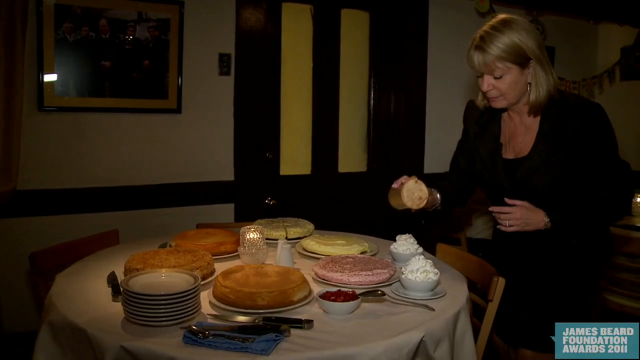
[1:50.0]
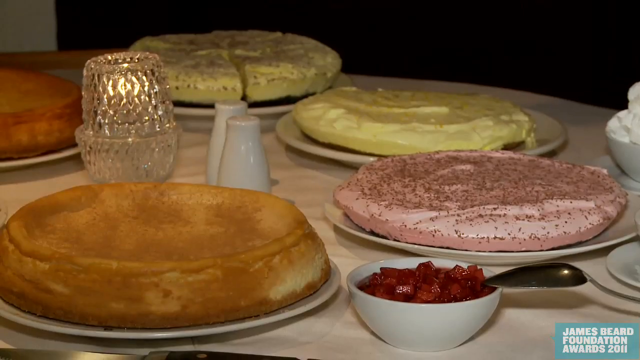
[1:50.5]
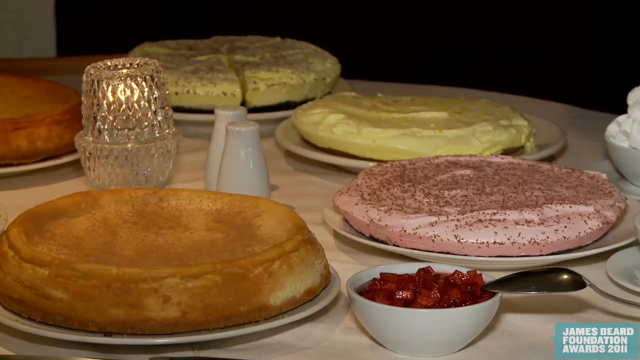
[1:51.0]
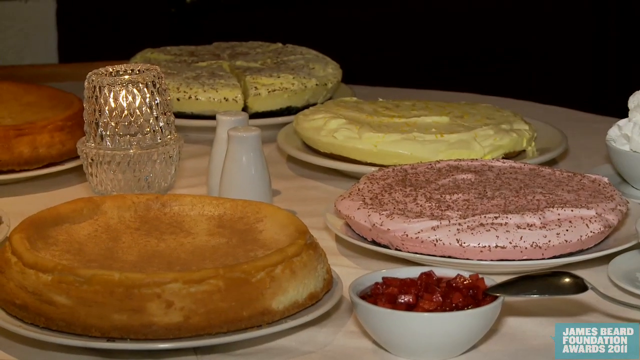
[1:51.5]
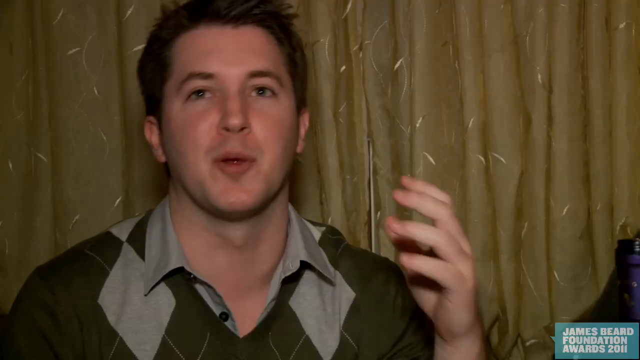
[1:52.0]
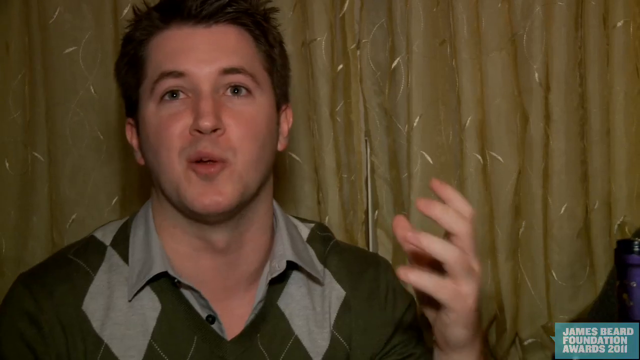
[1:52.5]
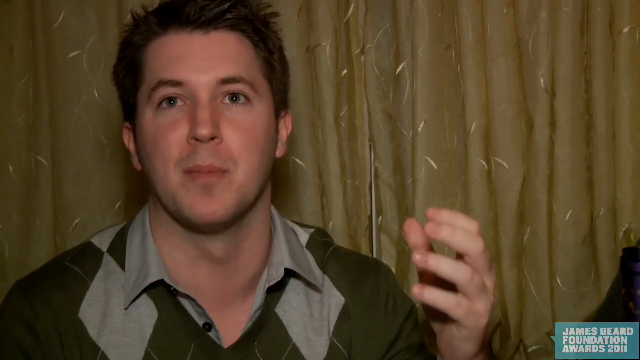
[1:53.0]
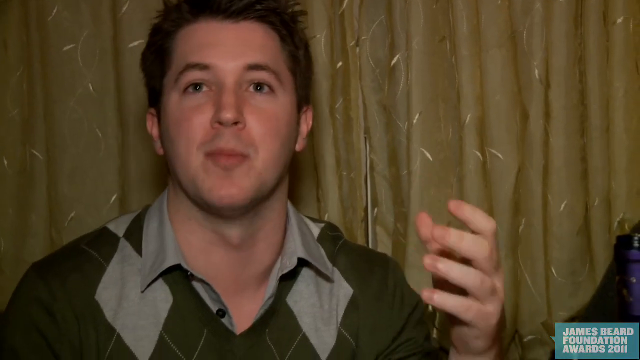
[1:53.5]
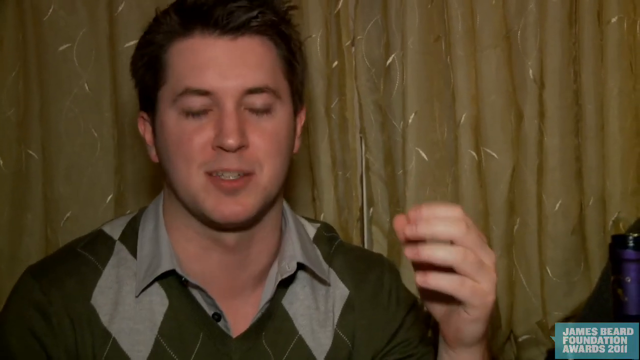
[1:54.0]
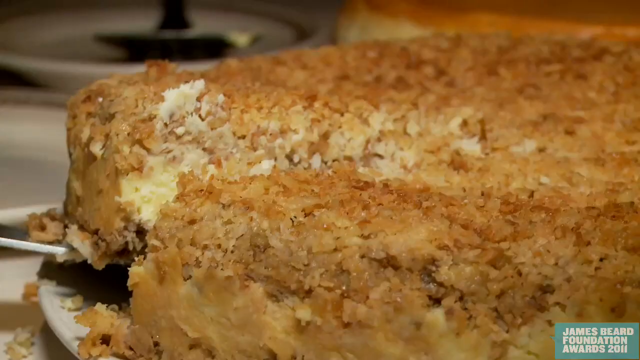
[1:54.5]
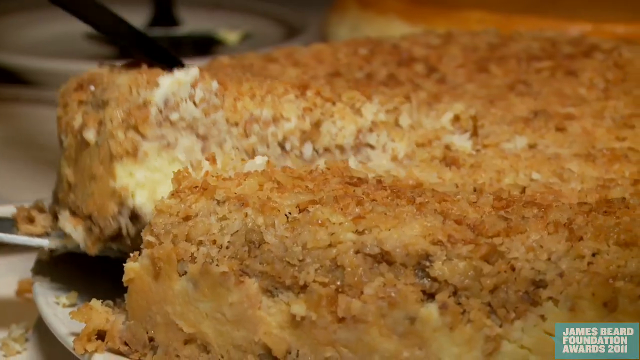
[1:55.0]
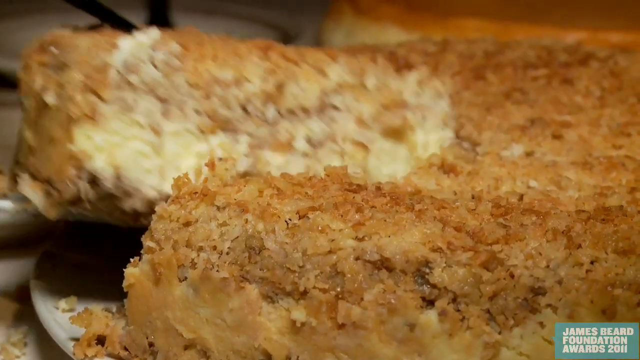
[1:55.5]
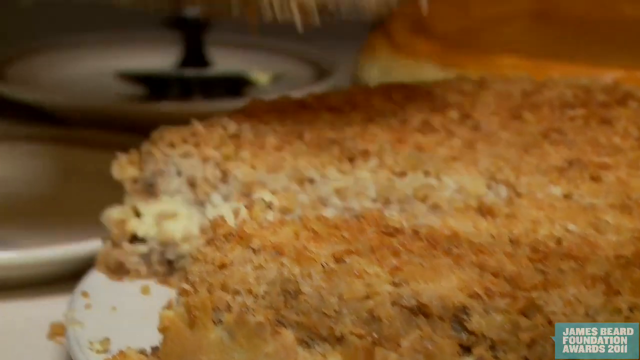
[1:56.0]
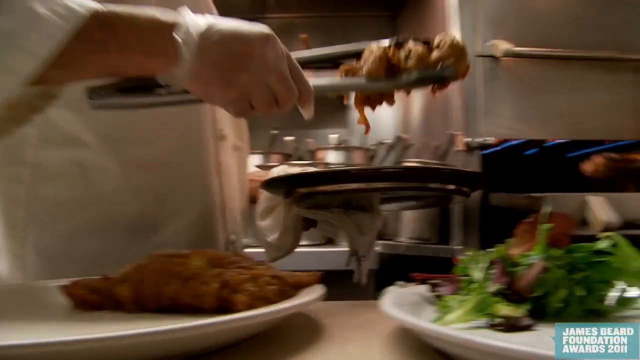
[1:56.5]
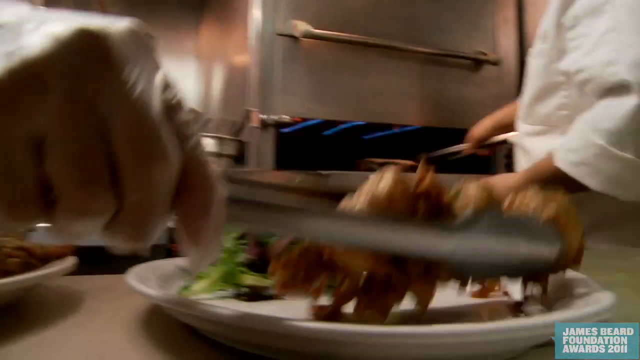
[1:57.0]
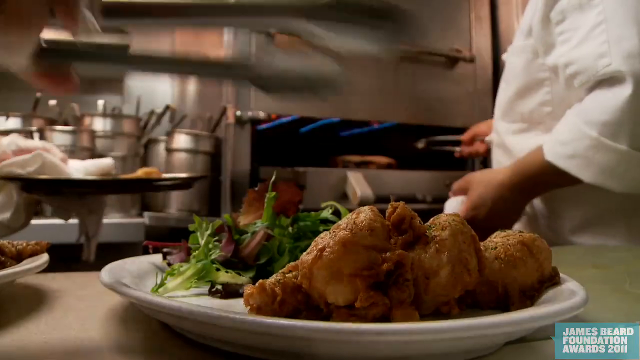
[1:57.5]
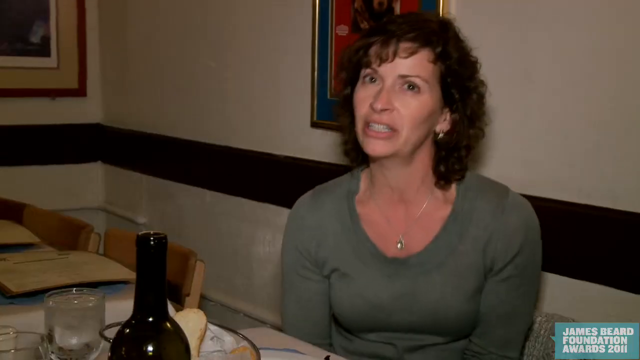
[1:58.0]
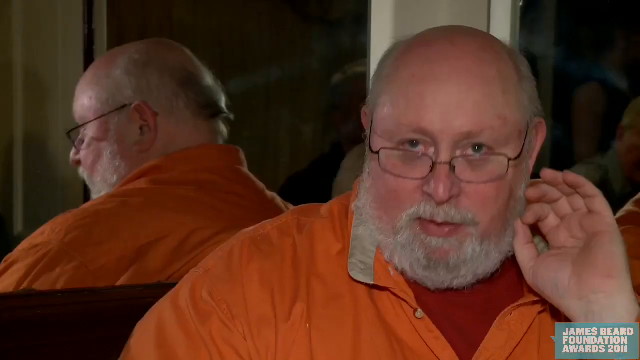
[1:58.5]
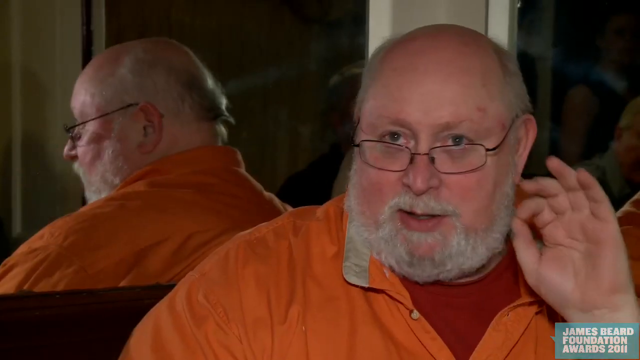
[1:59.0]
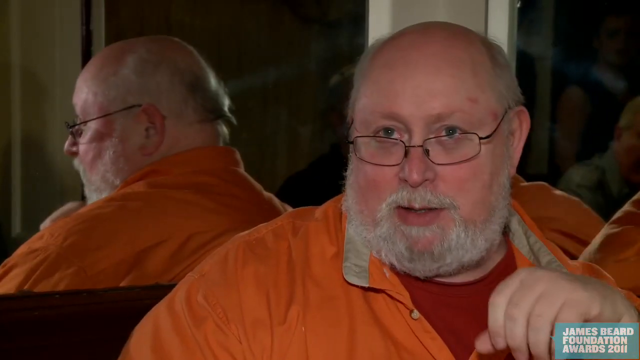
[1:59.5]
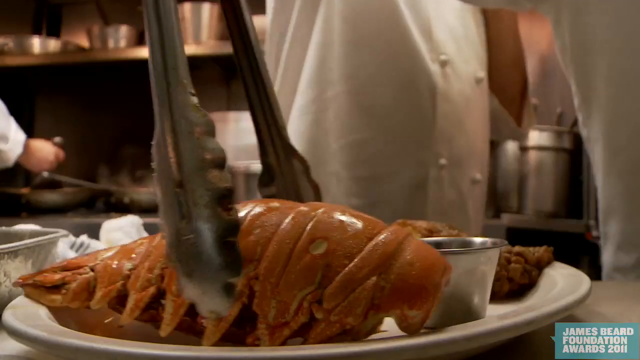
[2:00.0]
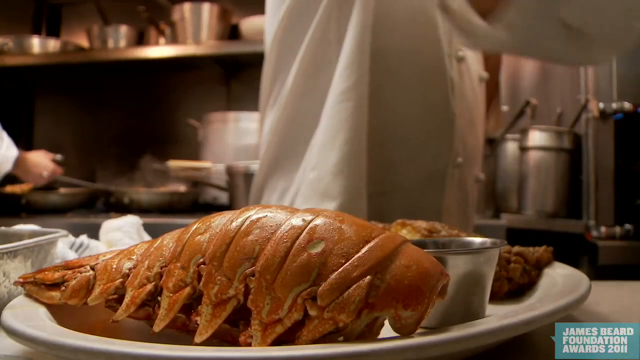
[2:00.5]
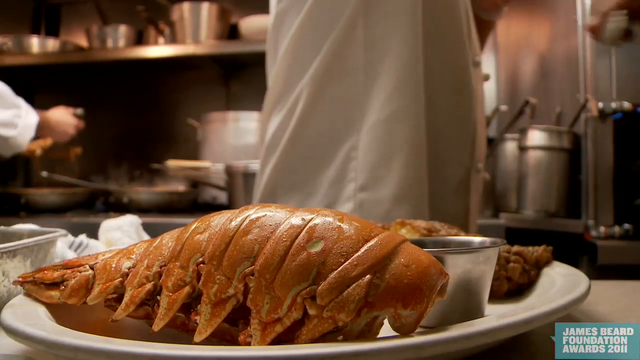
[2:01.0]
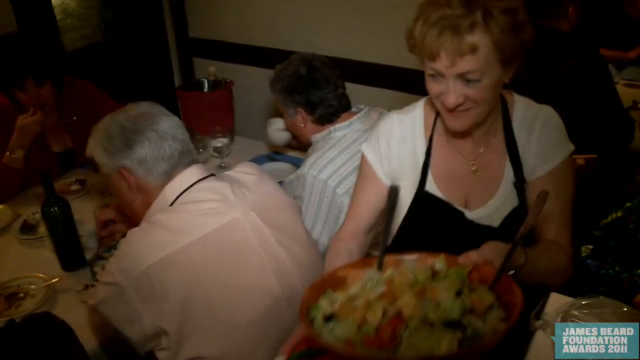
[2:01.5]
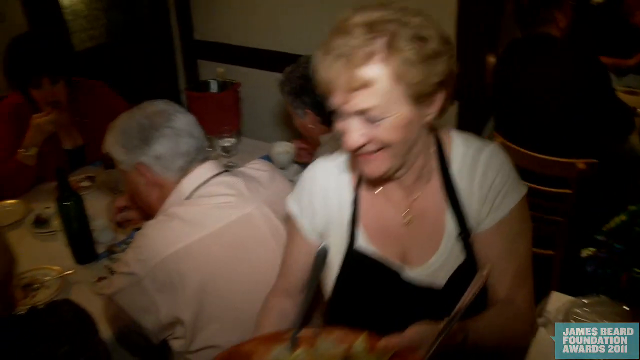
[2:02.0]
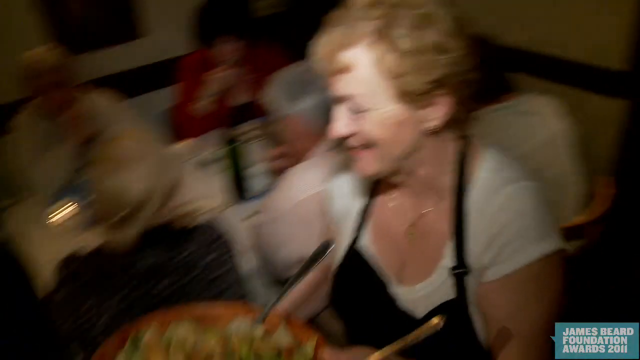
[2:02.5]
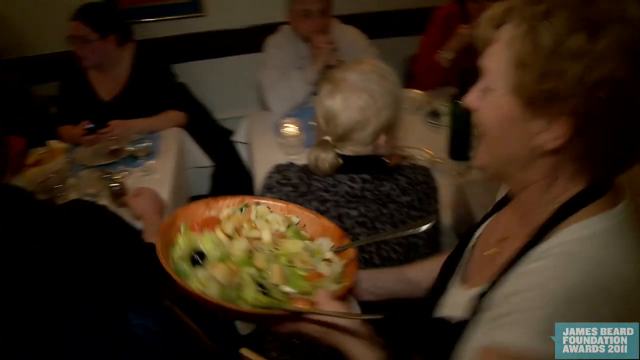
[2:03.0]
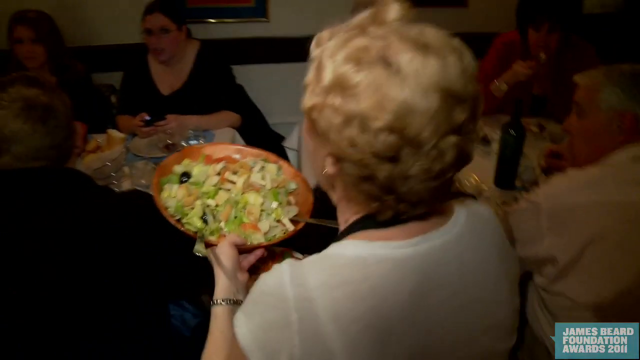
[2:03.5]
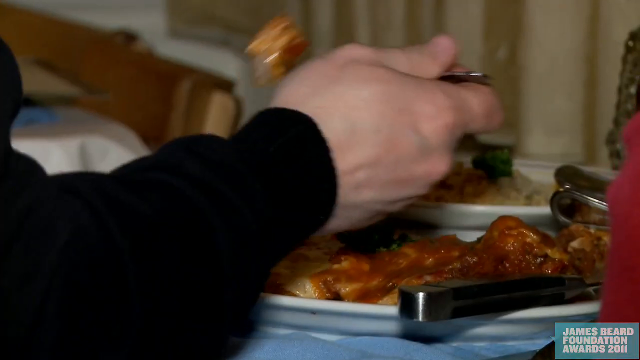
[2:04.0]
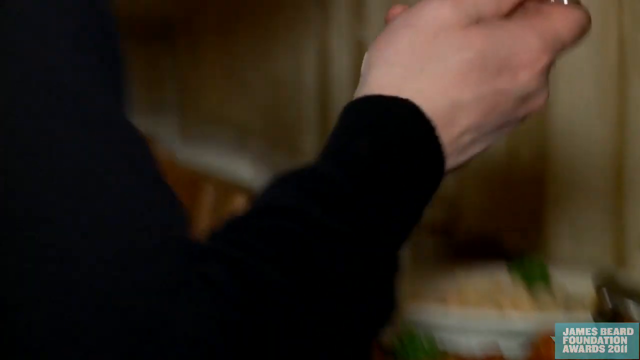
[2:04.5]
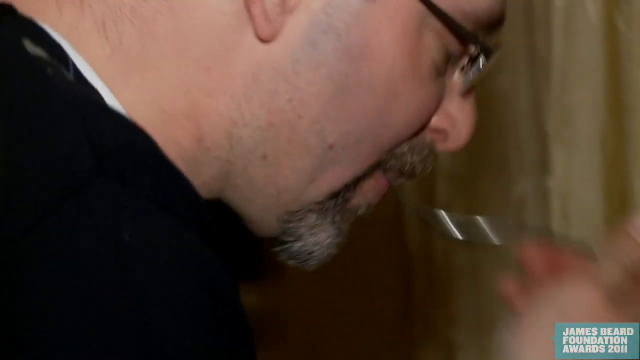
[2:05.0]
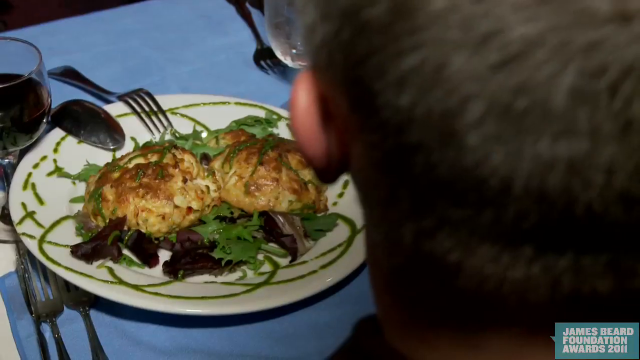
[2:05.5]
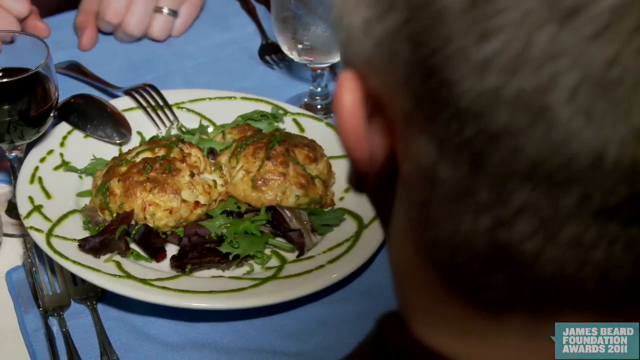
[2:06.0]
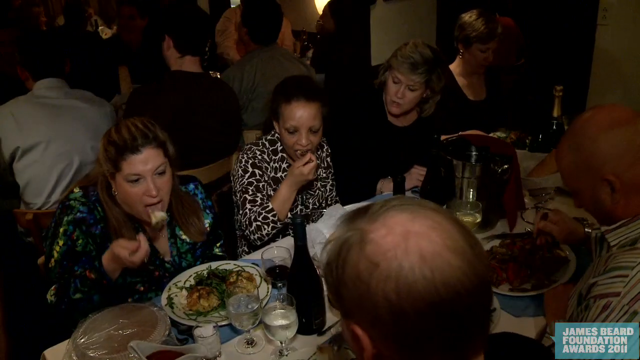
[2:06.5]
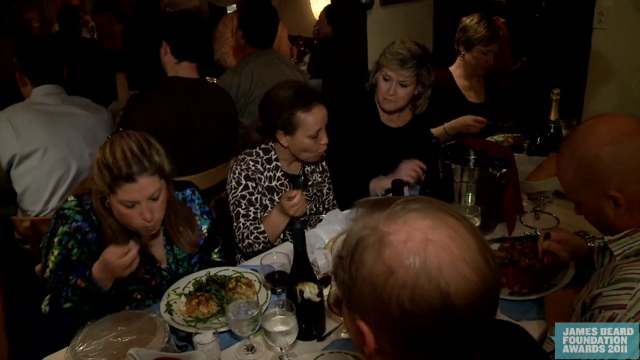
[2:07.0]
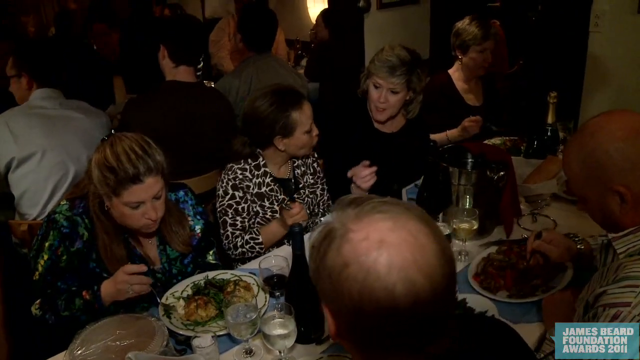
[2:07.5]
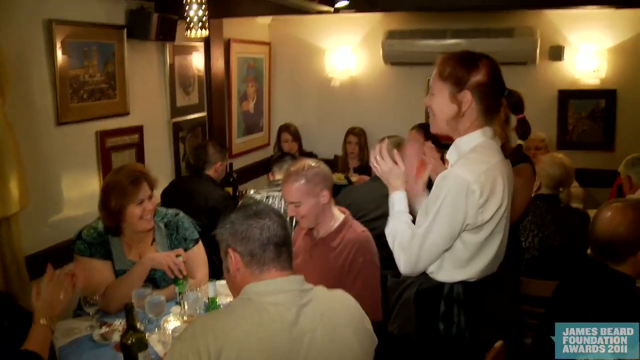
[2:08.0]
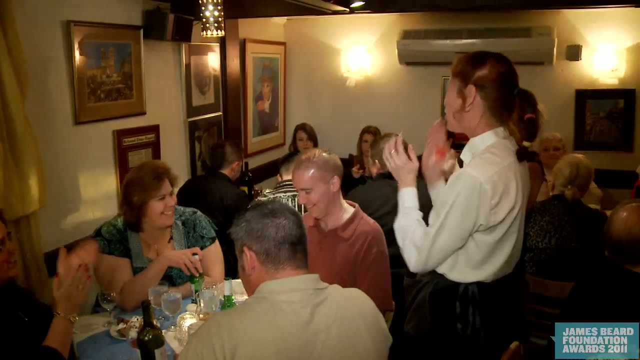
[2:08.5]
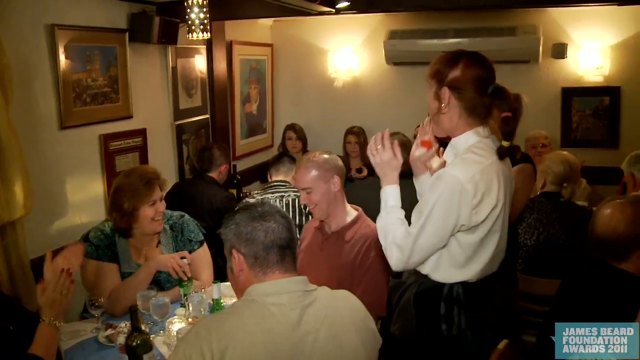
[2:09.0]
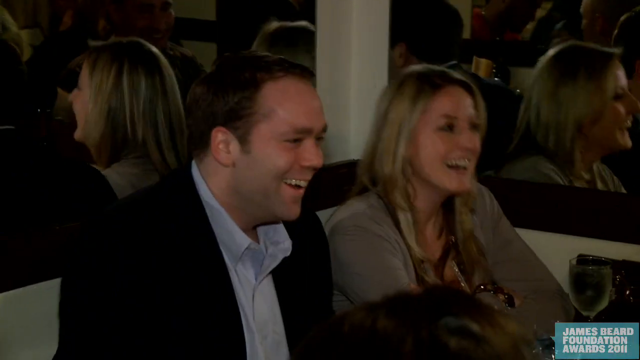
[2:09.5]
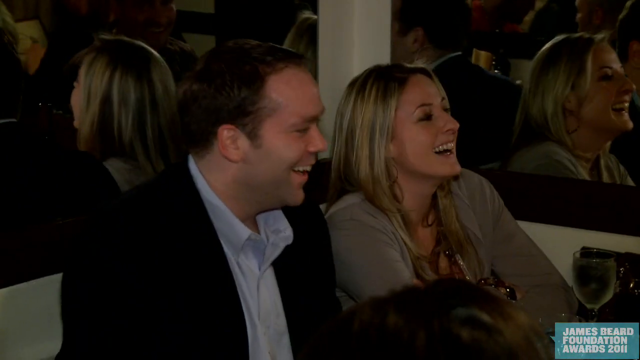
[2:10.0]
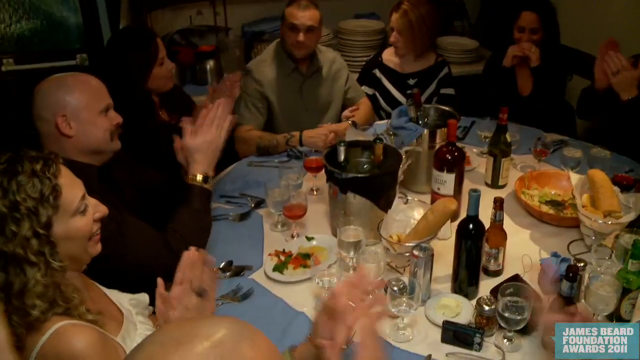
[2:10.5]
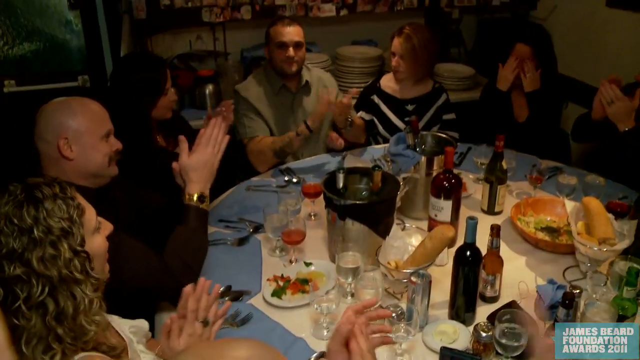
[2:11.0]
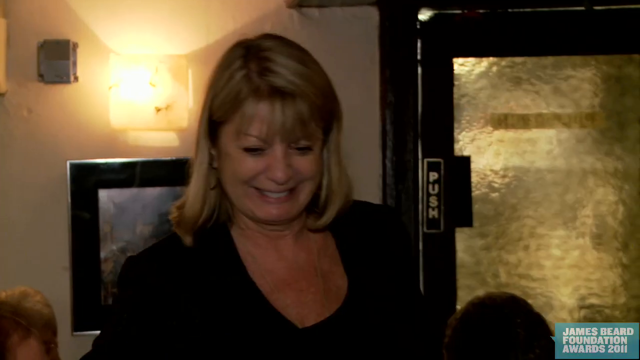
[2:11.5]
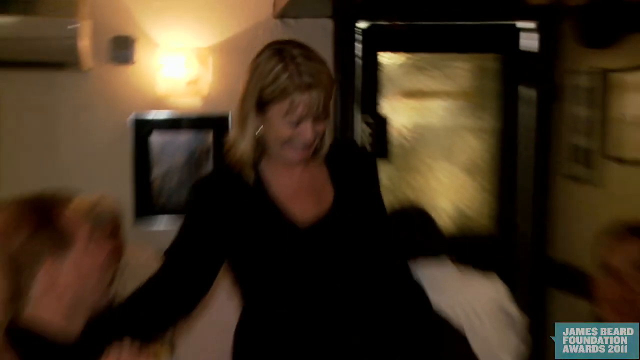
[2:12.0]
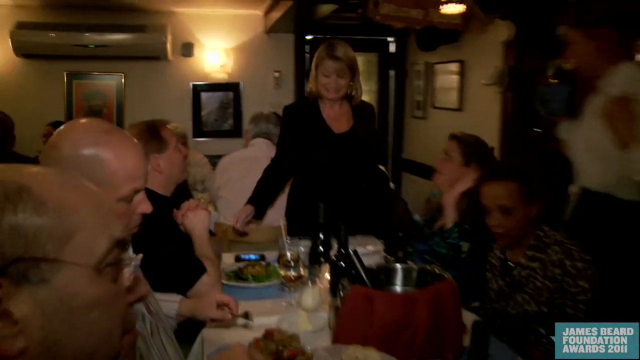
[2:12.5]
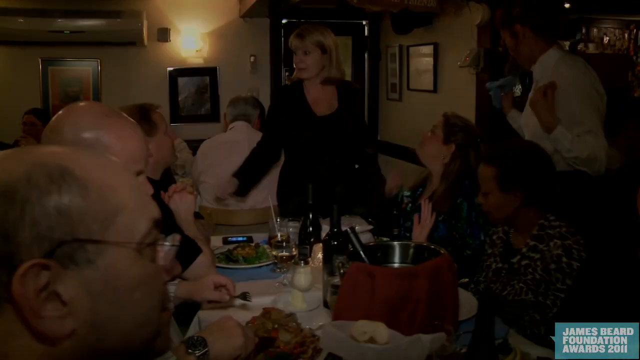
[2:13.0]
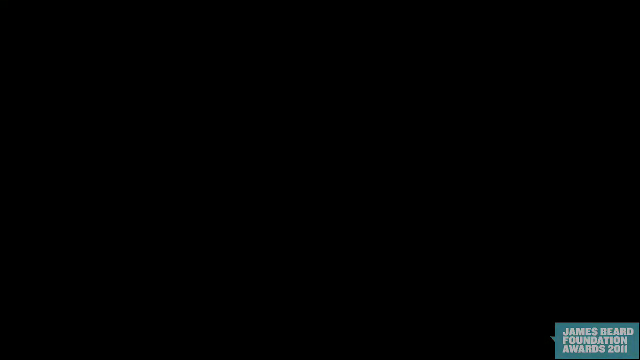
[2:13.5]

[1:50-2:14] The food is ready and everything is set in position for dinner. A gentleman facing the camera gives a demonstration with his left hand. At supper people are eating, and one person cuts a piece of the meat and puts it on the table. An old man with a grey beard, grey hair and glasses is talking on screen. The video returns to the gentlemen cooking, with the camera focusing only on the food they are preparing in the kitchen. An old woman cuts the food, and then it is served at the table, where they eat together as a family. The camera focuses on them singing, clapping and laughing. Some of them clap and celebrate a woman named Noice.